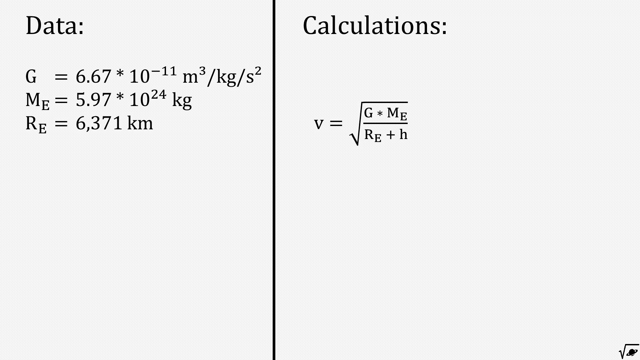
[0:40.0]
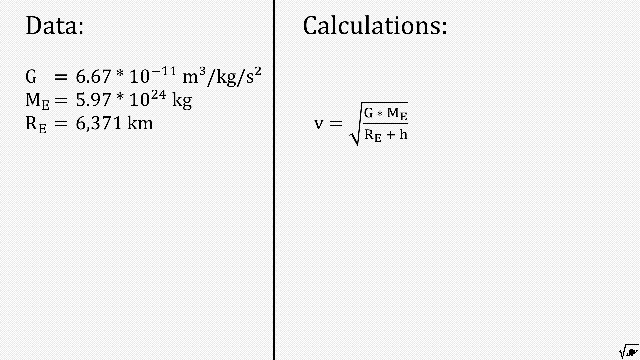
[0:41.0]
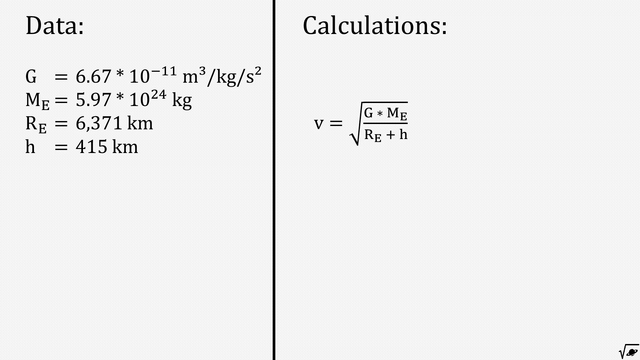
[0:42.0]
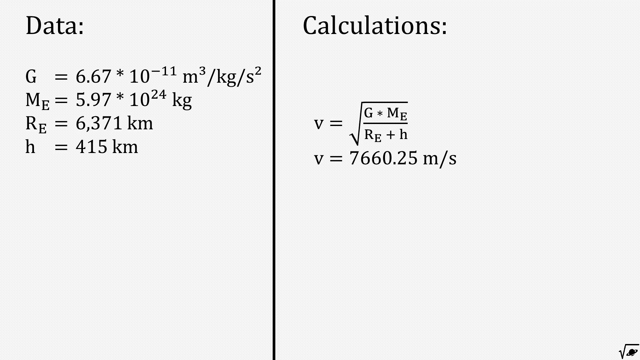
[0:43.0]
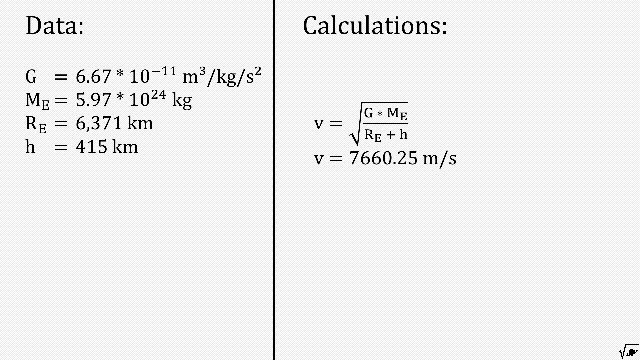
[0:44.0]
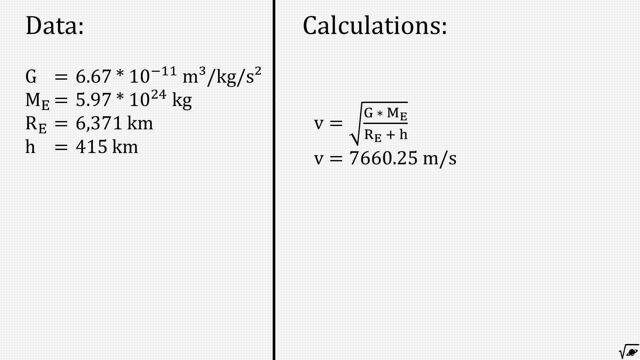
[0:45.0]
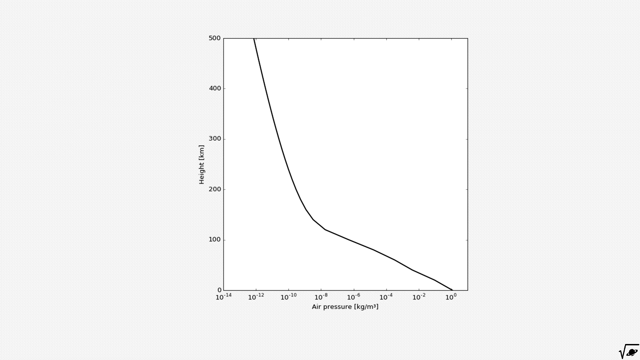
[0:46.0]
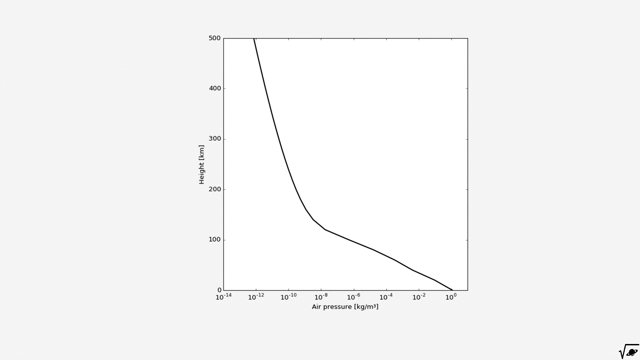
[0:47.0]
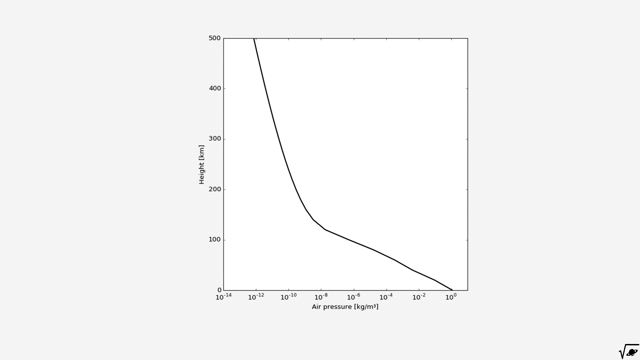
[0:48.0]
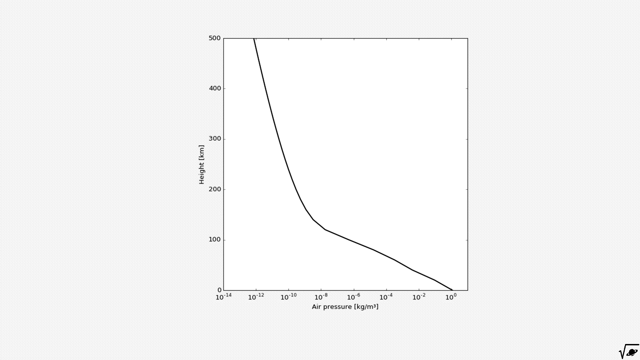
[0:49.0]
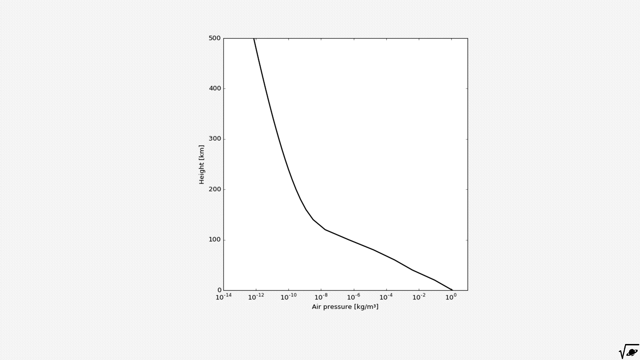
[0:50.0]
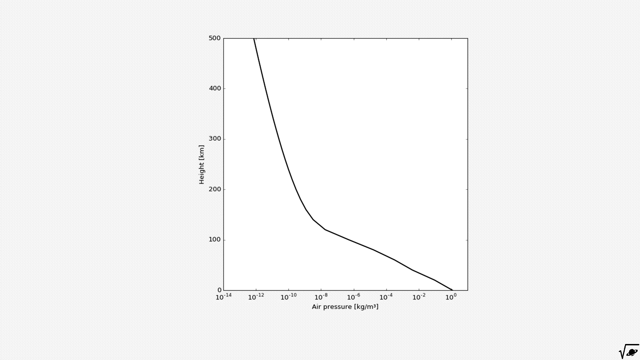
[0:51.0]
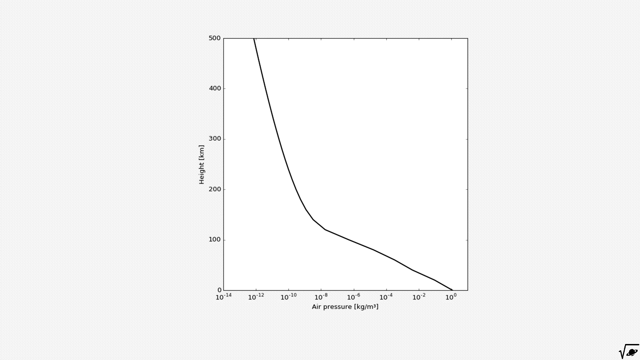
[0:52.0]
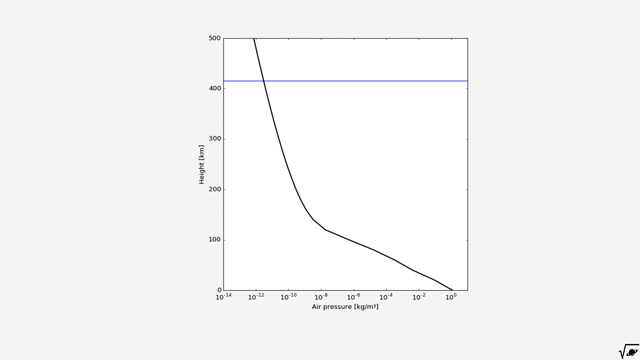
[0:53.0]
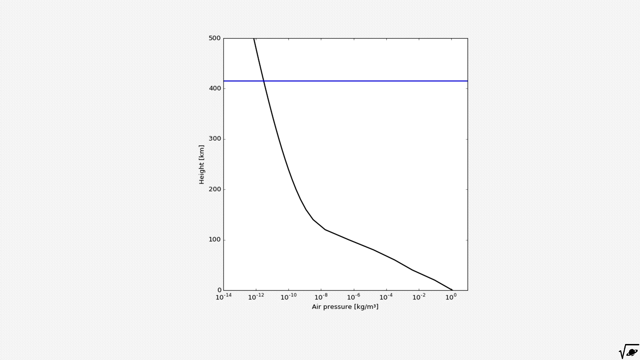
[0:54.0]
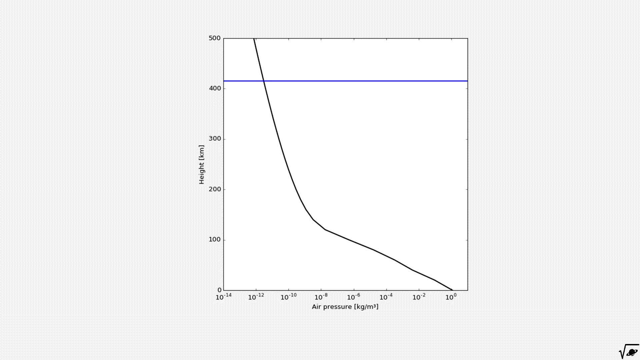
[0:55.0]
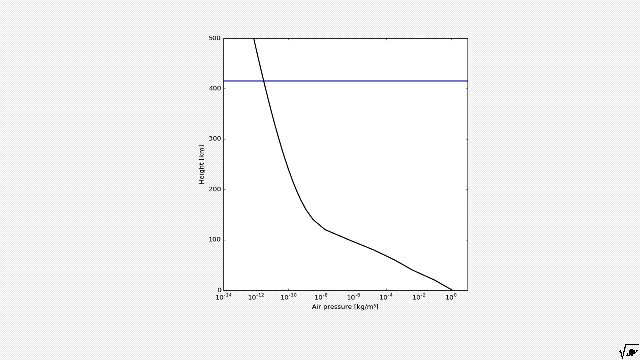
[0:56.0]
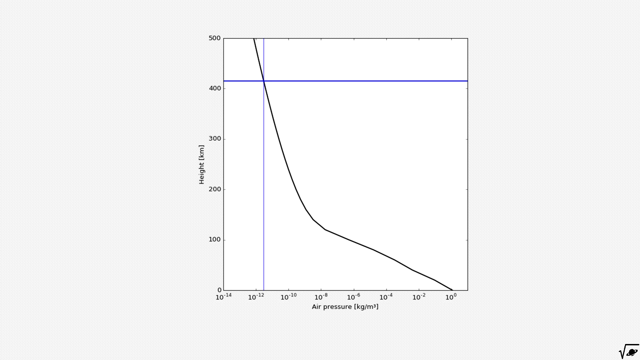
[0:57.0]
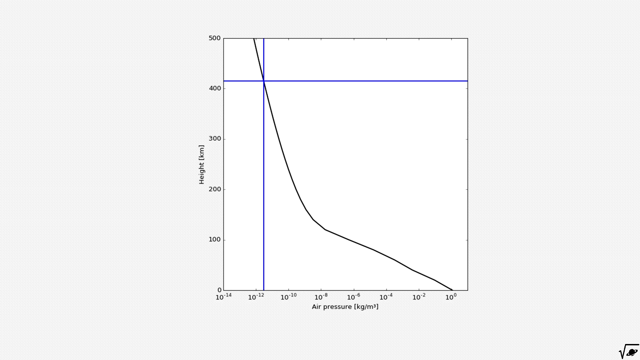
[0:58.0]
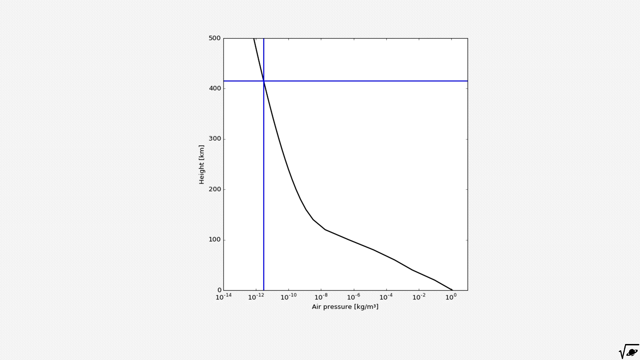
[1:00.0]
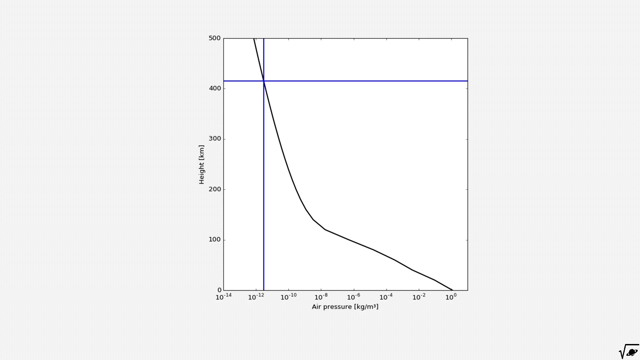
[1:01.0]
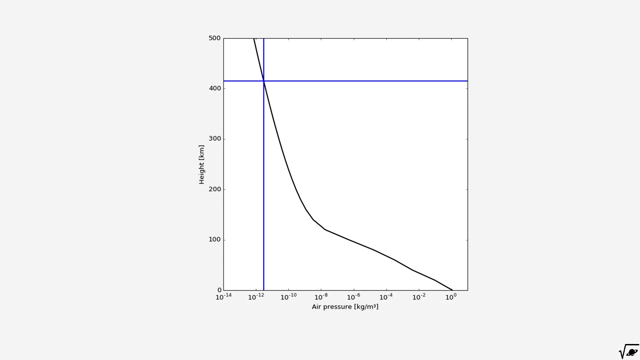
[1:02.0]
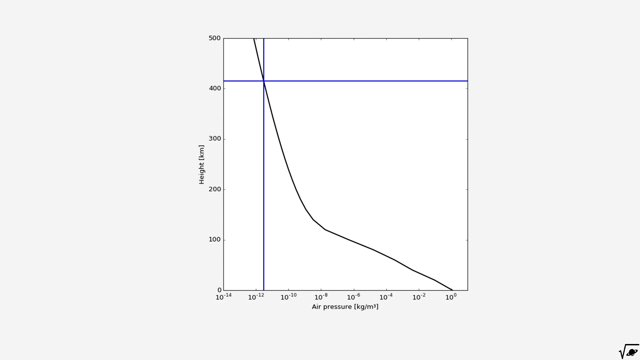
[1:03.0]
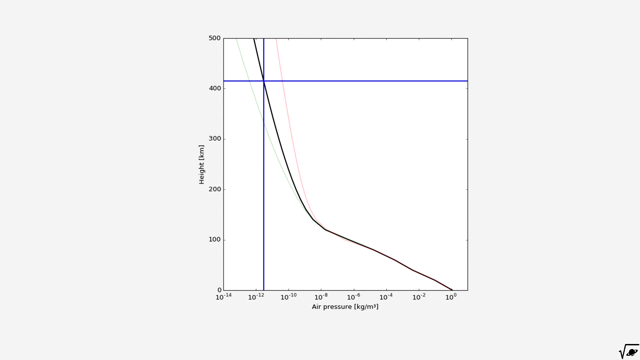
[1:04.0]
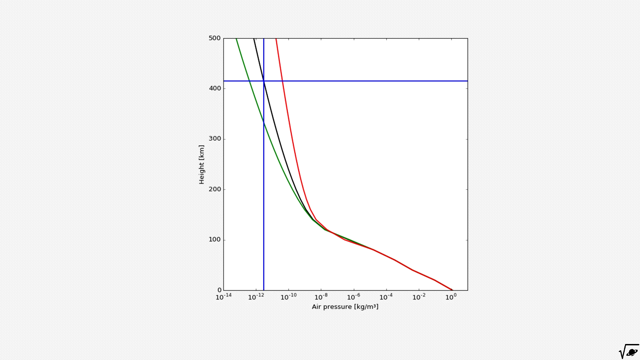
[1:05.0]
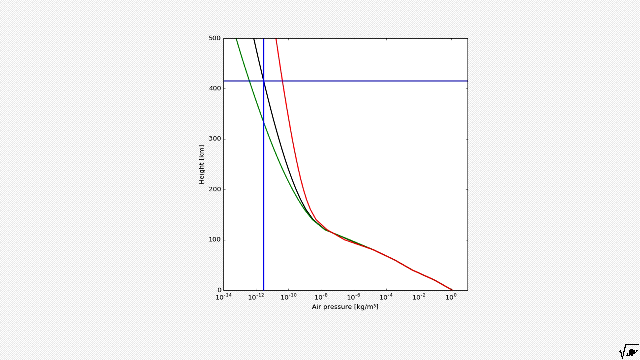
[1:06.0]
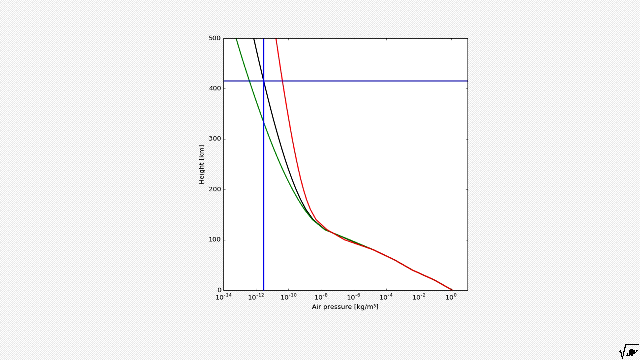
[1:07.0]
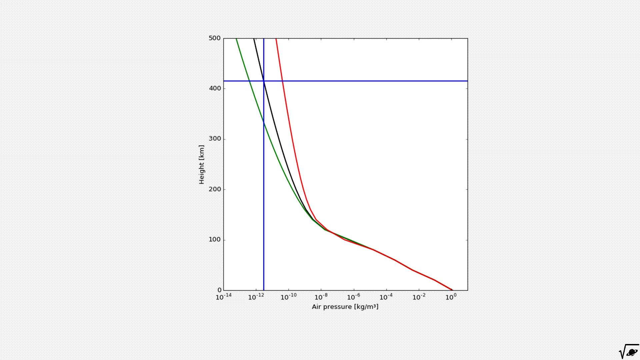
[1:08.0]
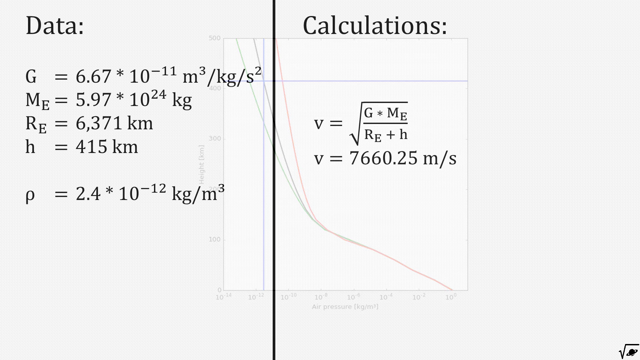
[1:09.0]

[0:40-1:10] A page shows data and calculations: "data" with two dots is on the left side, a line goes down vertically, and "calculations" is on the right. On the data side it reads G = 6.67 × 10 to a power, in m³/kg/s, Me = 5.97 × 10^24 kg, and Re = 6371 km. Under calculations, v equals the square root of G times Me over Re + h, with h = 415 km, and v = 7606. Then a chart appears with height in kilometers and air pressure labeled on the x-axis; a line runs roughly horizontally just above the 400 mark.